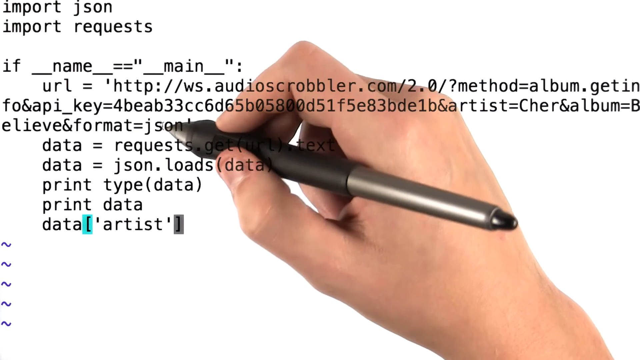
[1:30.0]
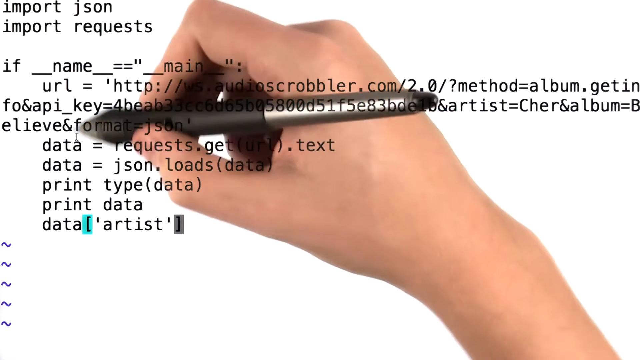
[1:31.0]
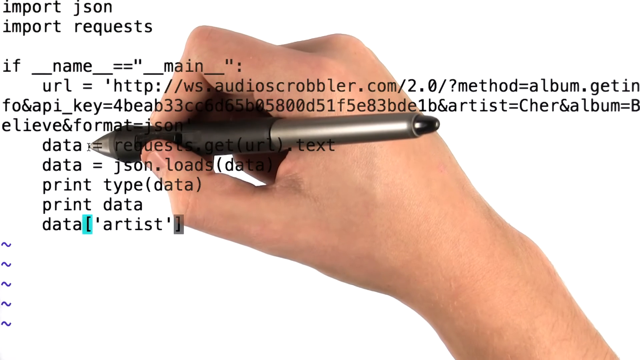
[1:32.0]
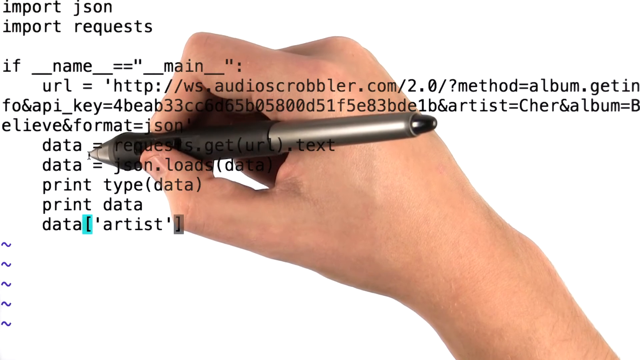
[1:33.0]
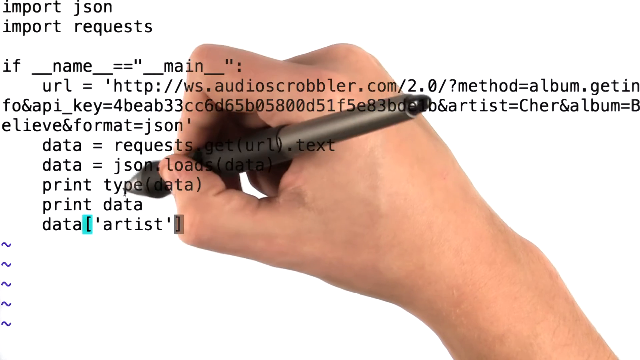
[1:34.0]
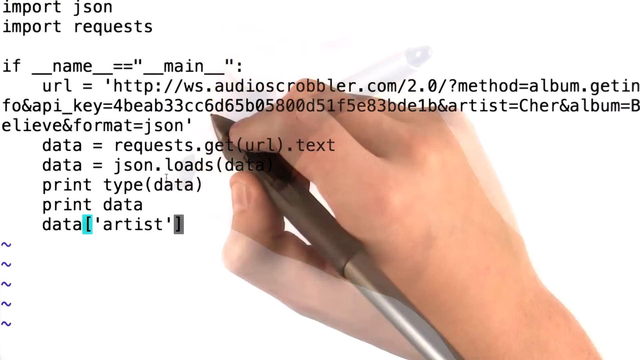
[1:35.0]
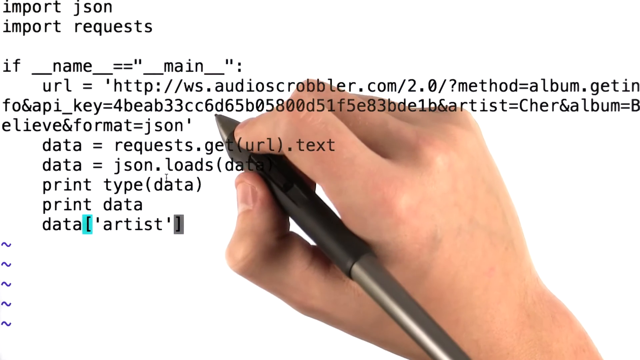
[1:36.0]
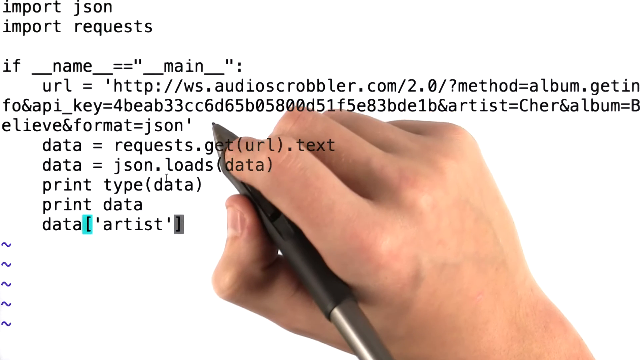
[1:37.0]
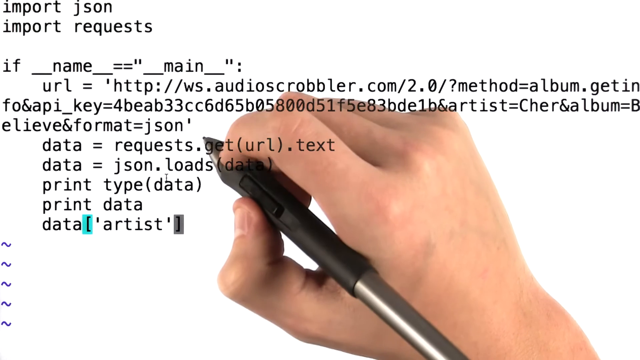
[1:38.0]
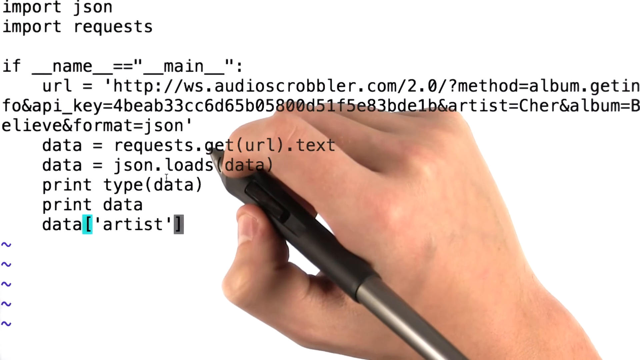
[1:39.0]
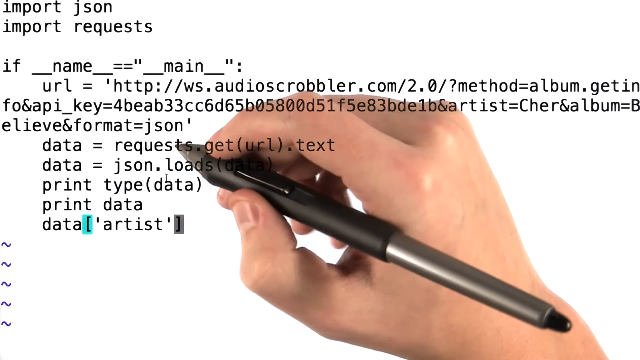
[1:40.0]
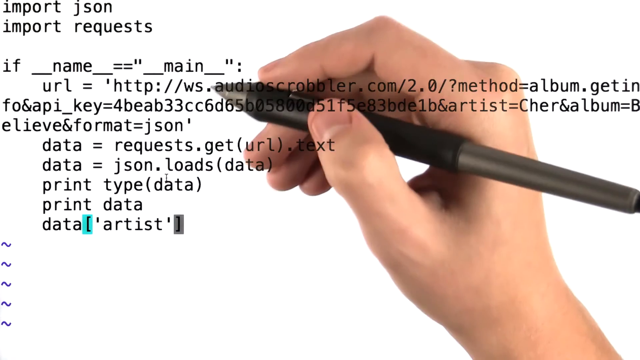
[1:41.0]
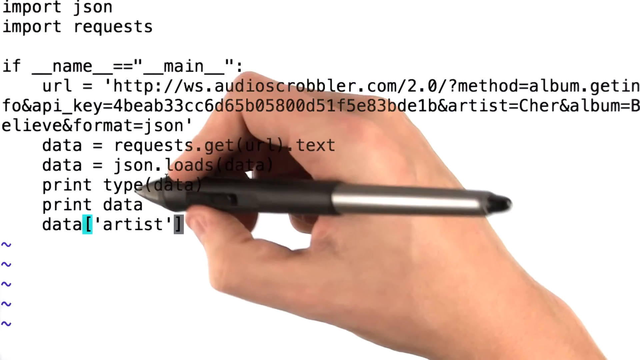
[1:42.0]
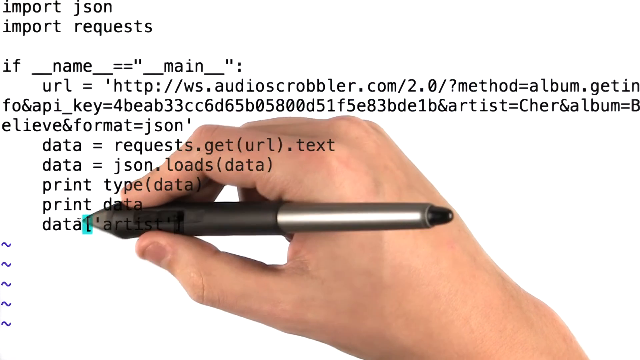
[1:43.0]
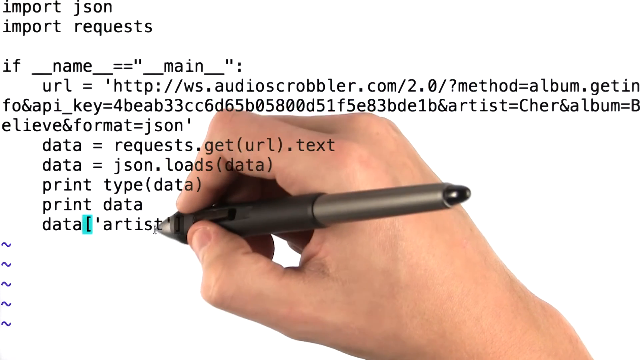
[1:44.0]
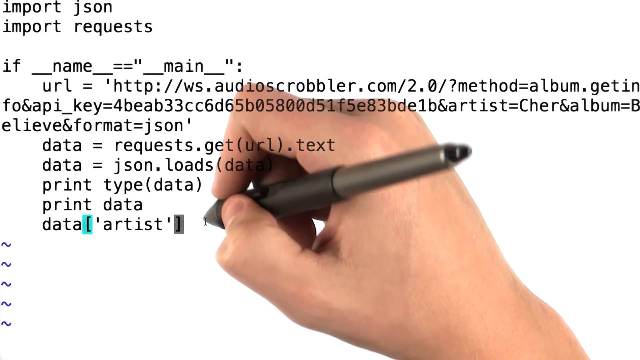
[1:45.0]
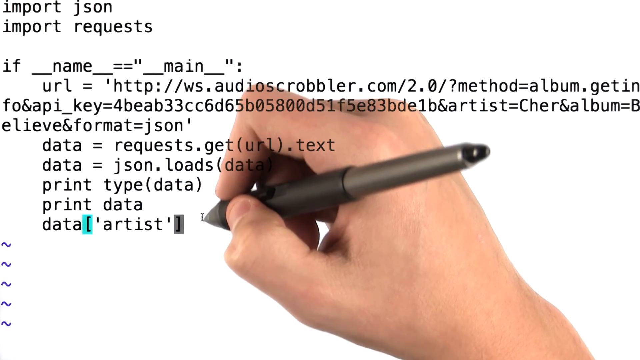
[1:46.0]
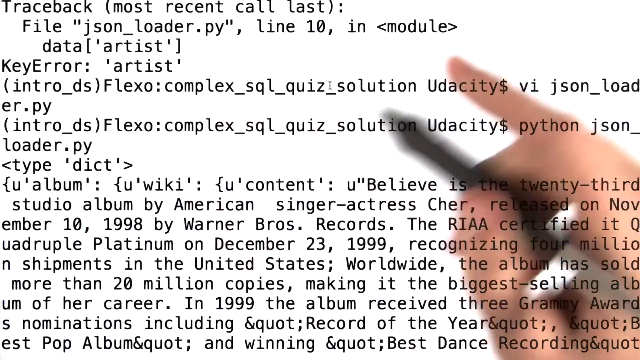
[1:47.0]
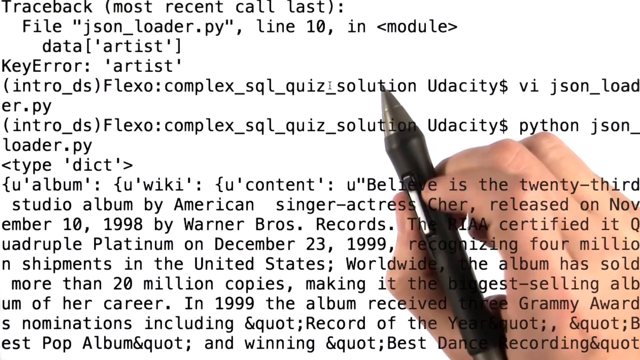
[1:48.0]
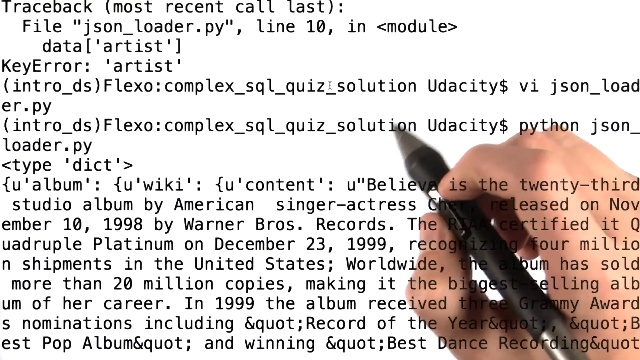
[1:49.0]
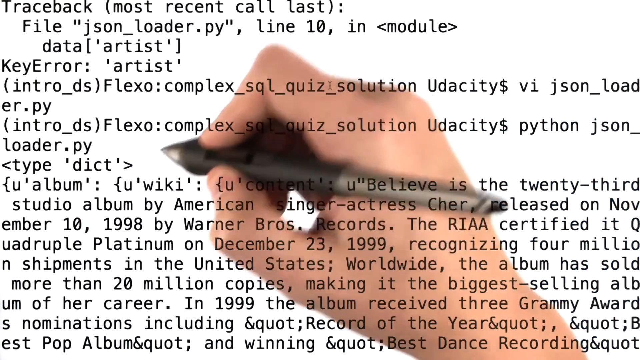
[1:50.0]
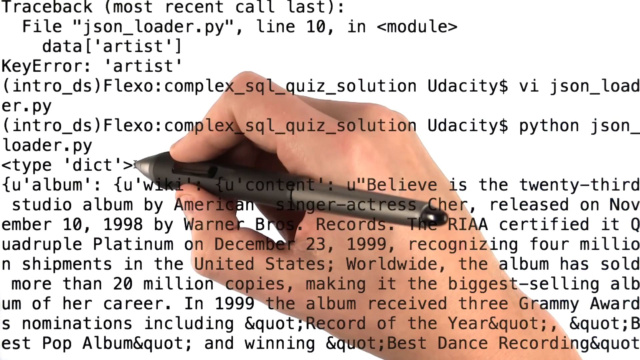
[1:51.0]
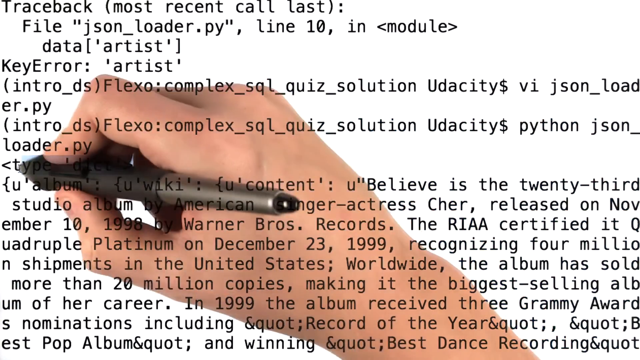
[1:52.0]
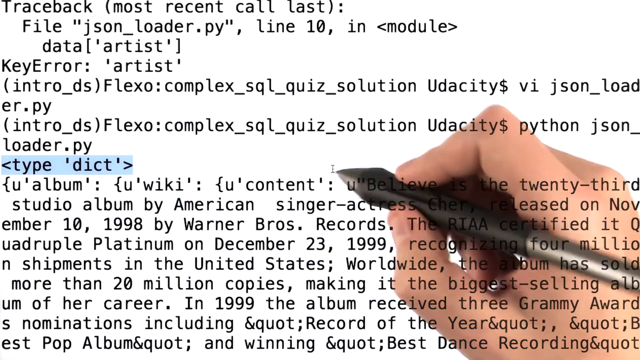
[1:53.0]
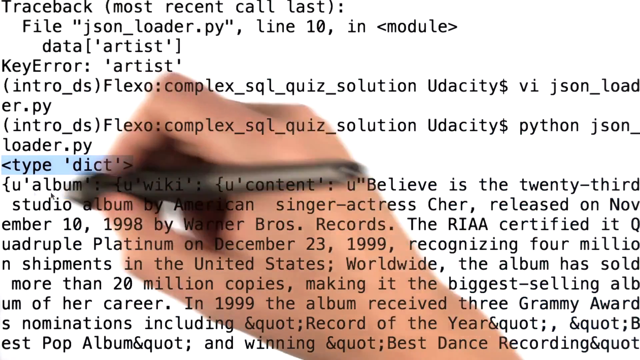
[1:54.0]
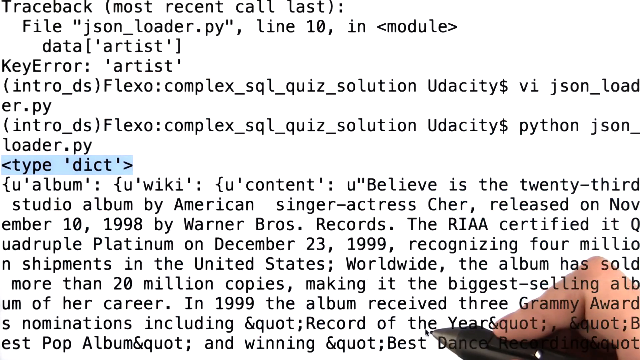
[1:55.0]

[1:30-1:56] The author's hand and pen are visible as he goes through the code step by step, pointing to where lines and dashes go, and colored marks can be seen. Another page pops up showing errors, and certain parts of the code are highlighted. As the code is highlighted, he moves his hand down to the bottom of the screen.